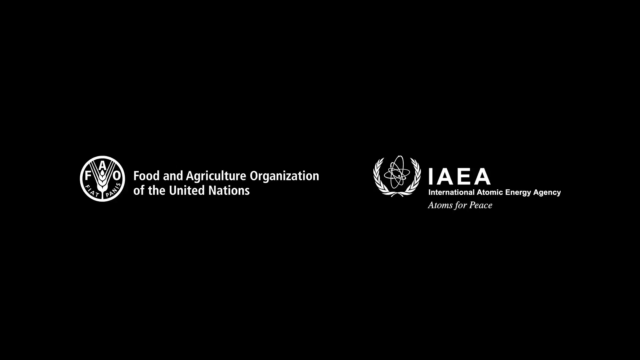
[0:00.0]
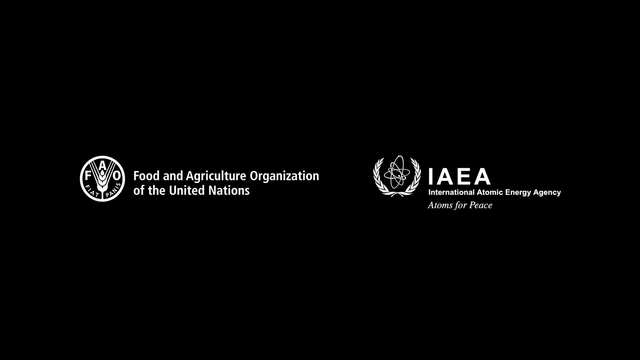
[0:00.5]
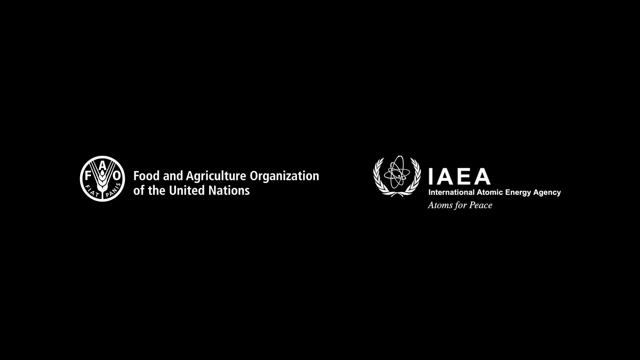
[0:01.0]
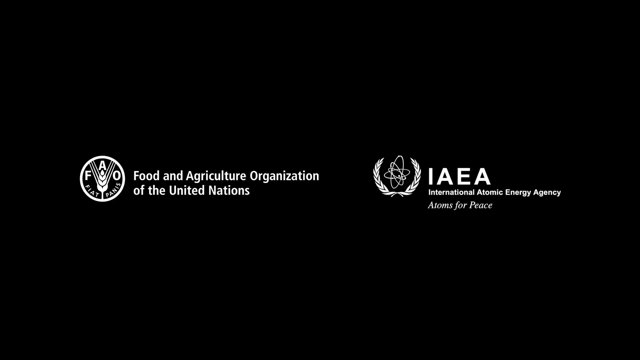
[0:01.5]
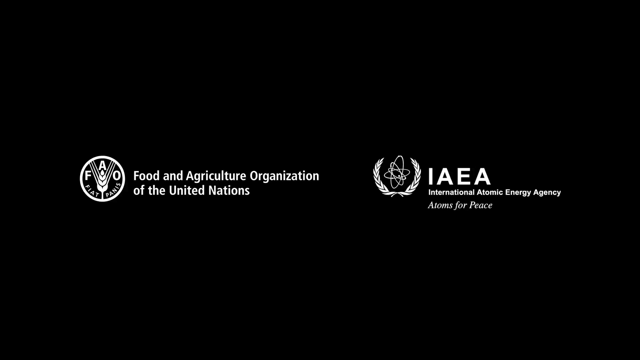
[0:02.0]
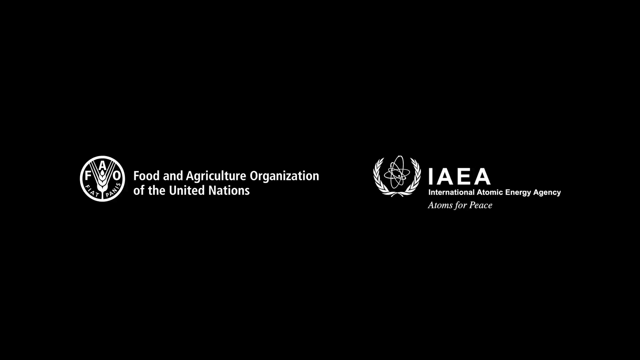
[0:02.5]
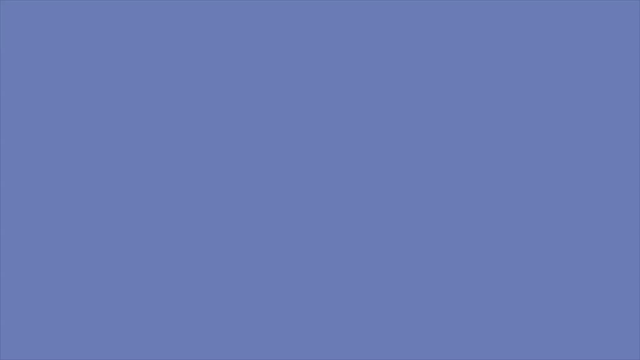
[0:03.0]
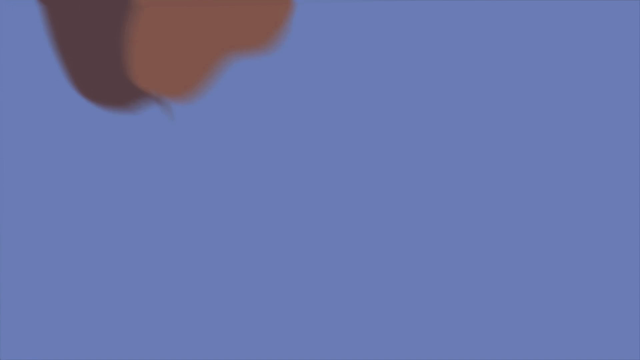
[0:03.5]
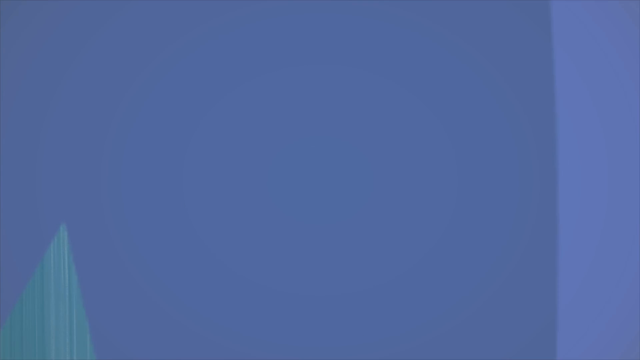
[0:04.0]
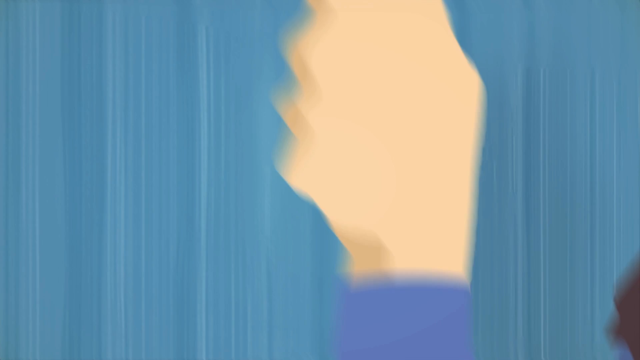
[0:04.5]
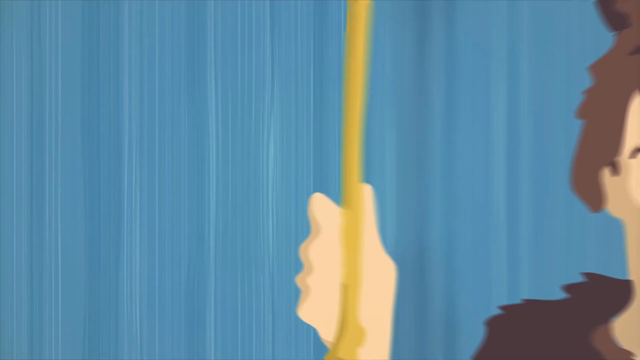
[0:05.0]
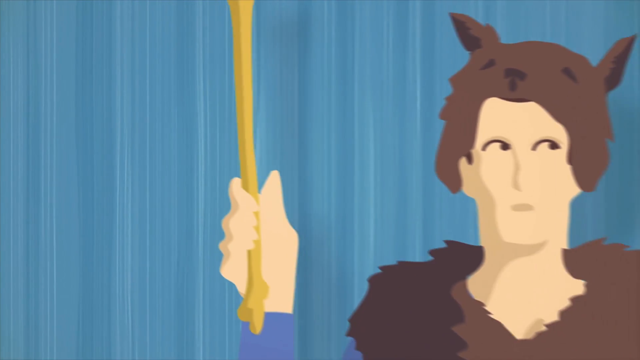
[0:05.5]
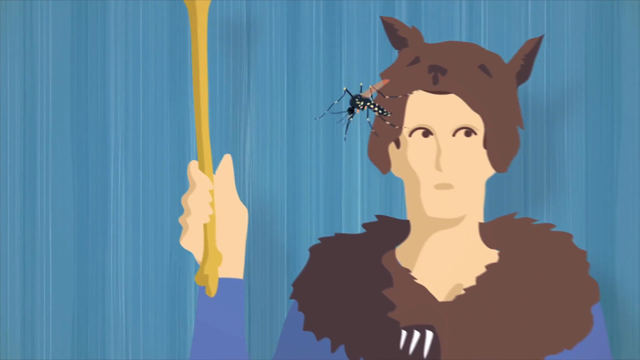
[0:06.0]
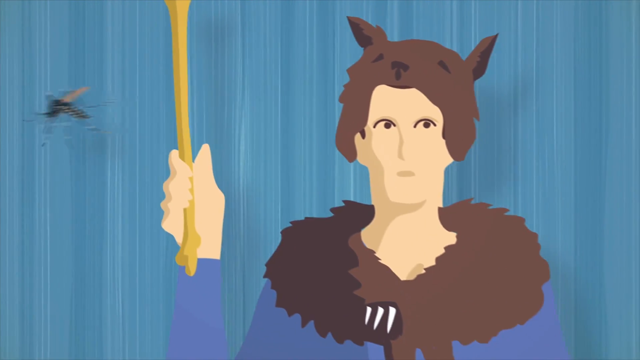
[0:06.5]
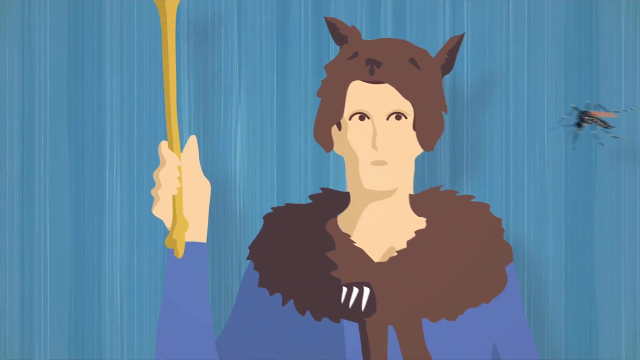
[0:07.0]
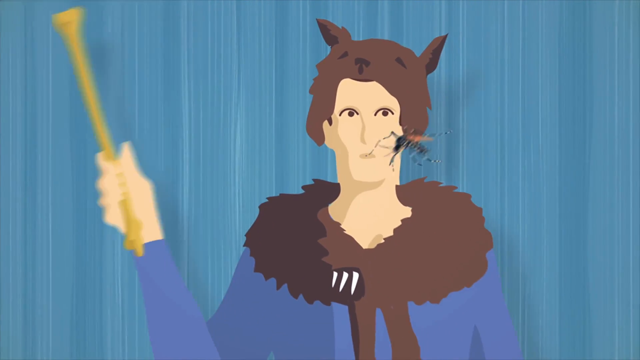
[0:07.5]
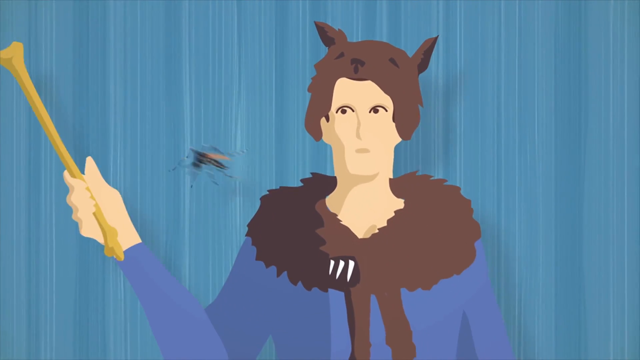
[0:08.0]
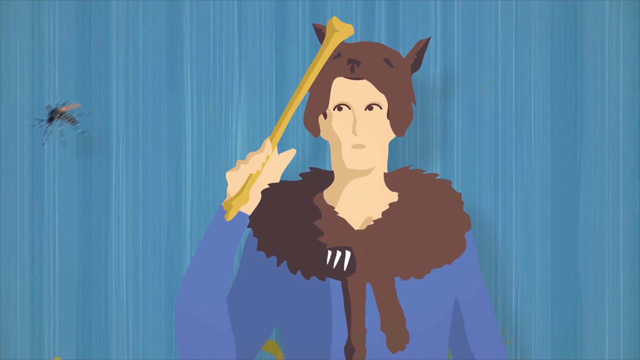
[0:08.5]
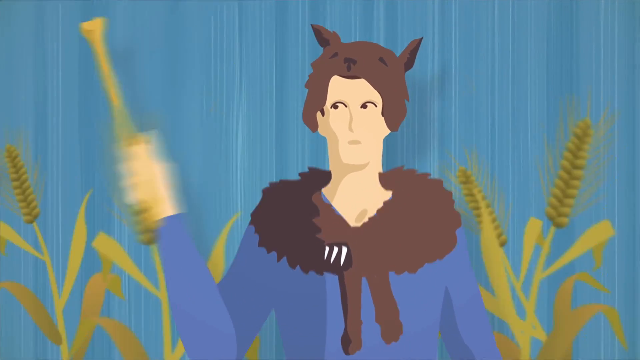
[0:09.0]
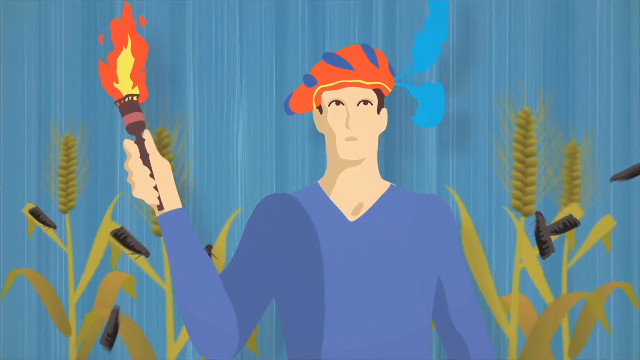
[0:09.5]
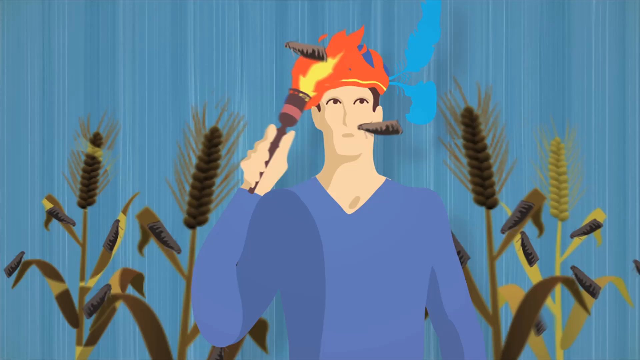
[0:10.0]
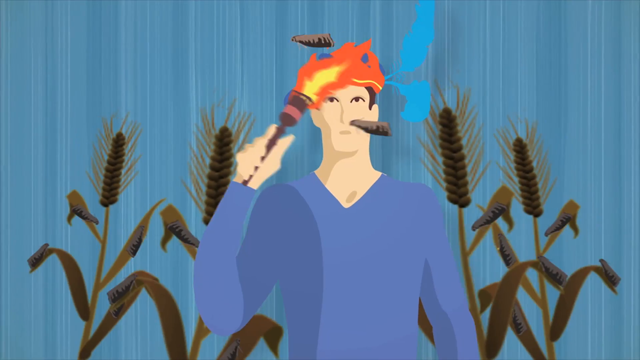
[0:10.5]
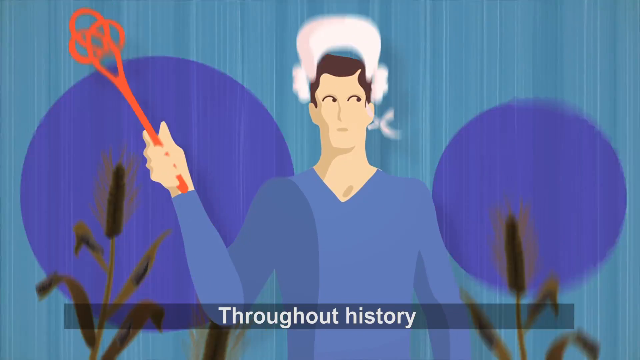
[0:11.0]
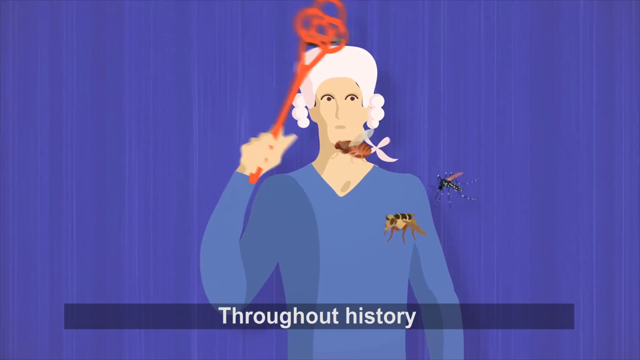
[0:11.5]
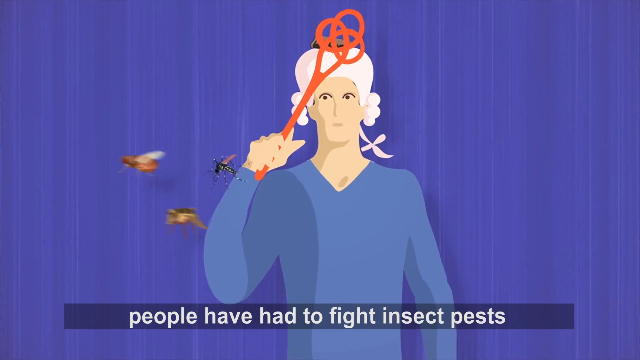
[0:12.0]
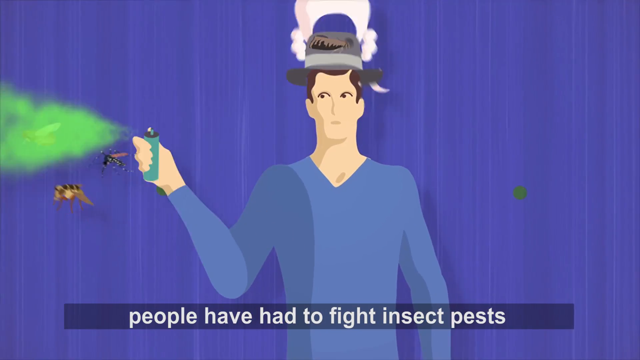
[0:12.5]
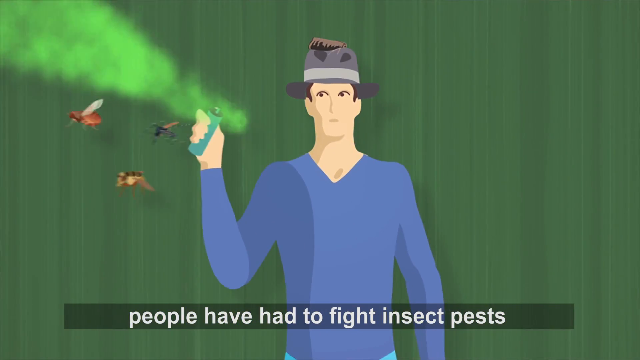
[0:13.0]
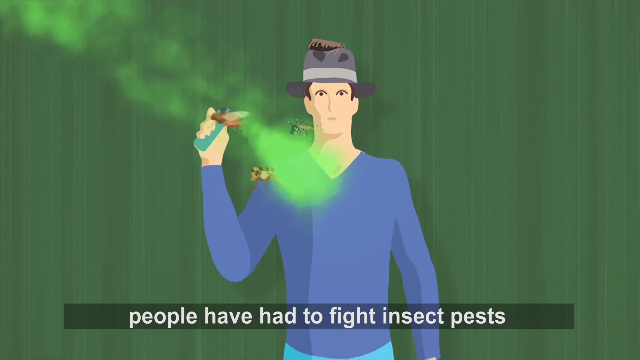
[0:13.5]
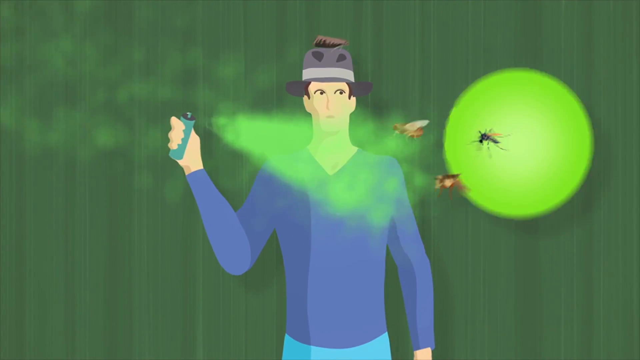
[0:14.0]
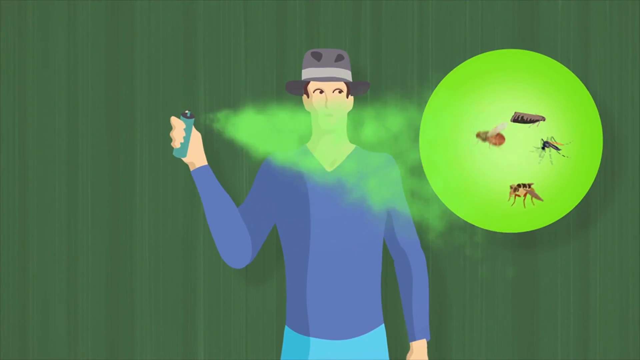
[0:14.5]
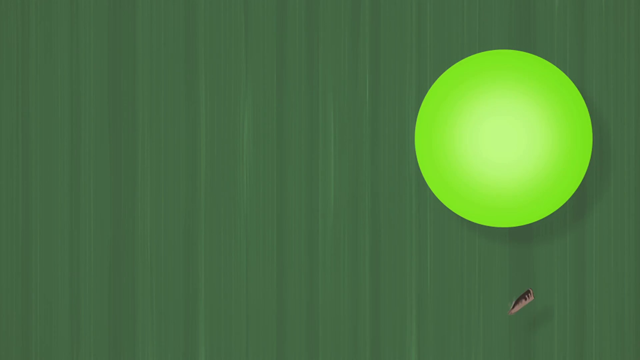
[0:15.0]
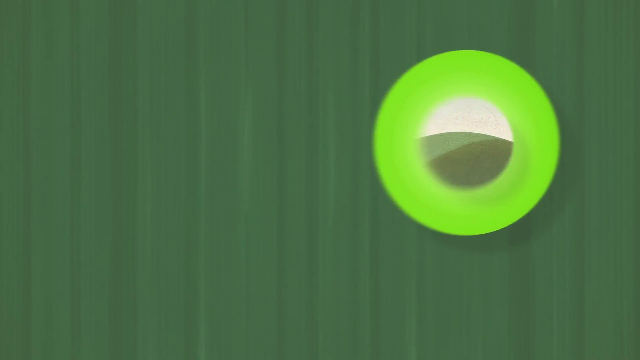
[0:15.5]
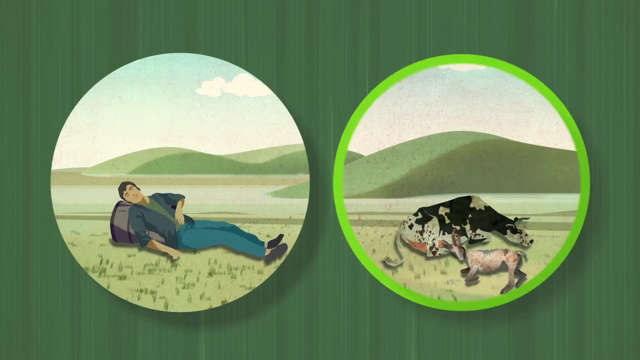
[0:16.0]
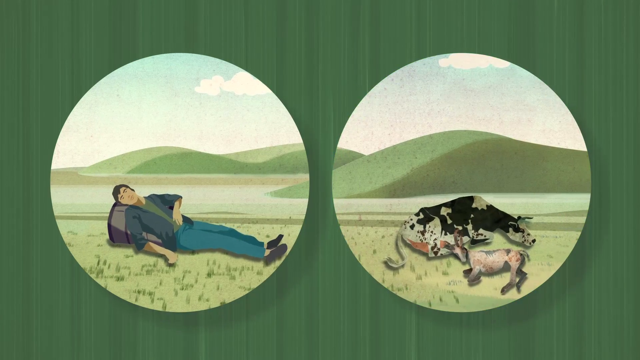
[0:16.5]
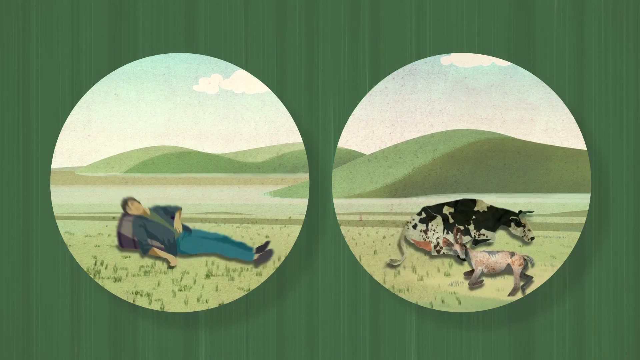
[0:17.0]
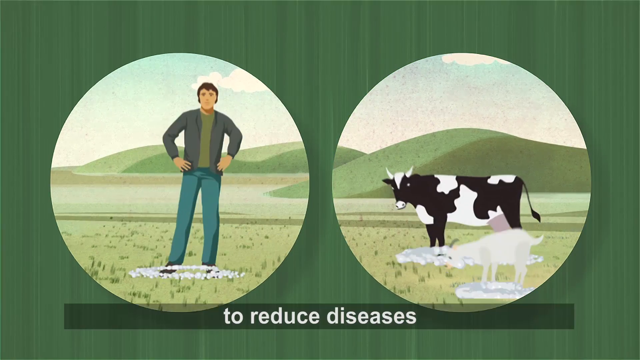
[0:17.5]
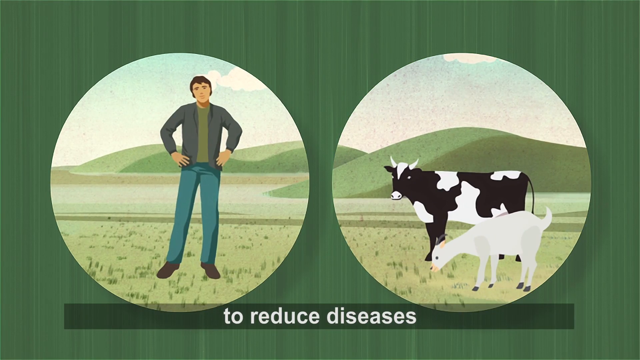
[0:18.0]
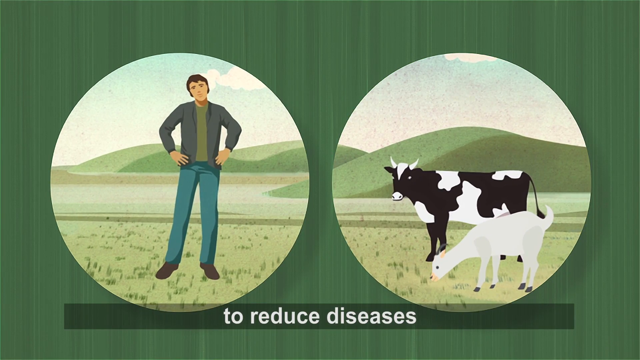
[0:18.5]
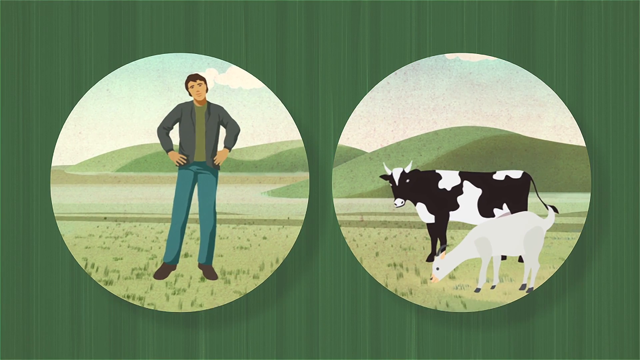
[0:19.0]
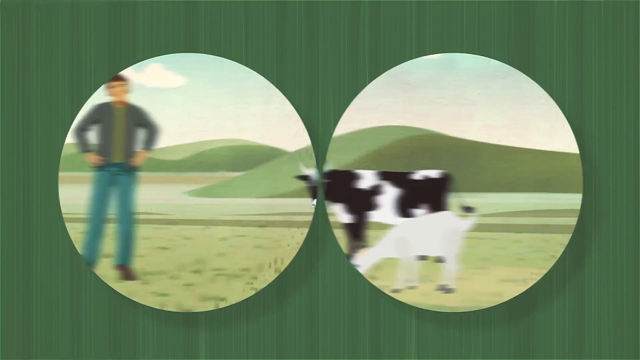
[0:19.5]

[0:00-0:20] The Food and Agriculture Organization of the United Nations and the International Atomic Energy Agency are named at the start. The video opens with a man in a blue shirt wearing a kind of furry scarf and what looks like an animal's head as a hat. In his hand he has a stick or scepter of some kind, which he waves at some bugs, maybe mosquitoes. The scene evolves to him wearing a different kind of headwear, with crops in the way that look like wheat, and a flaming torch in his hand that he is still waving at the bugs. It evolves again to a man in a wig holding what looks like a carpet beater, still waving it at the bugs; the wig apparently dates to around the 18th or 19th century. Next comes a man in a fedora spraying what is apparently bug spray at the bugs. This evolves into a landscape scene with a man lying on the ground, looking dead though maybe he is not, and animals also dead on the ground. From there it evolves further into a man standing, and a cow and a goat standing and grazing.